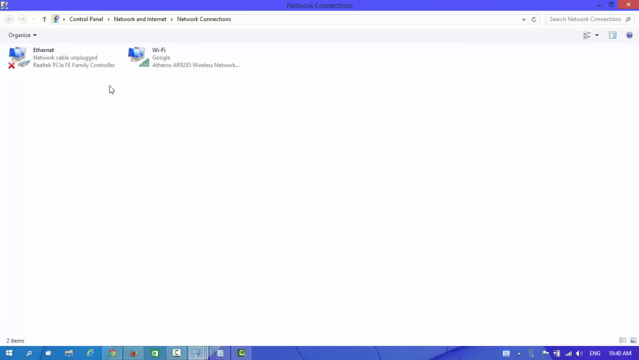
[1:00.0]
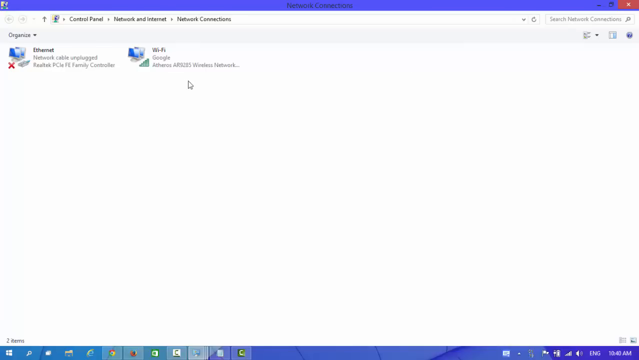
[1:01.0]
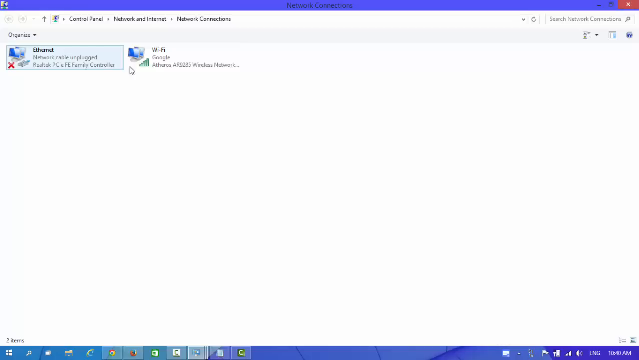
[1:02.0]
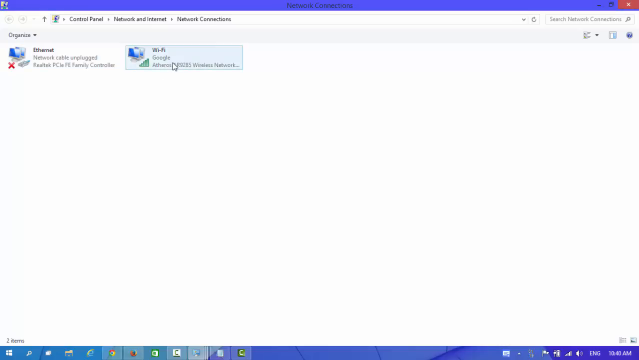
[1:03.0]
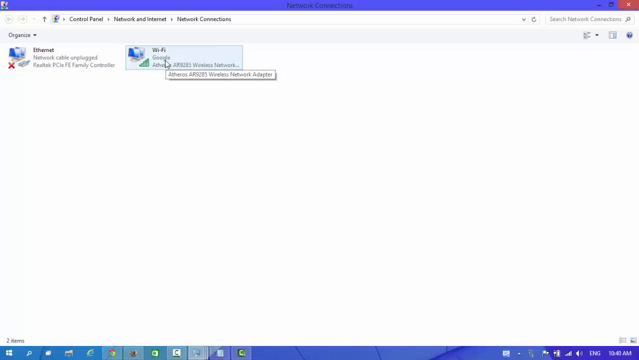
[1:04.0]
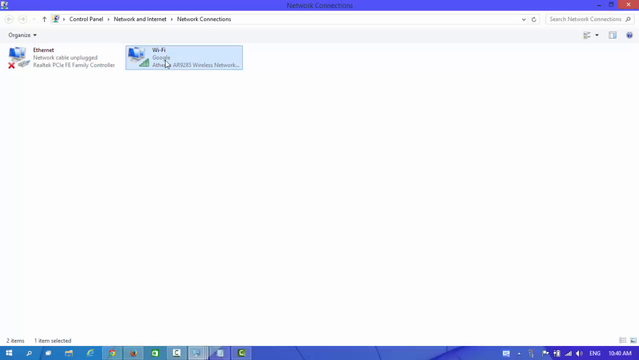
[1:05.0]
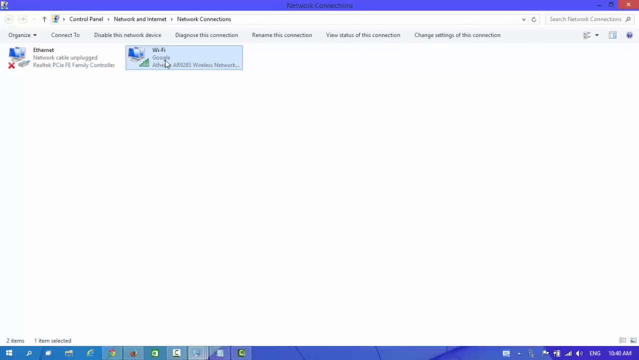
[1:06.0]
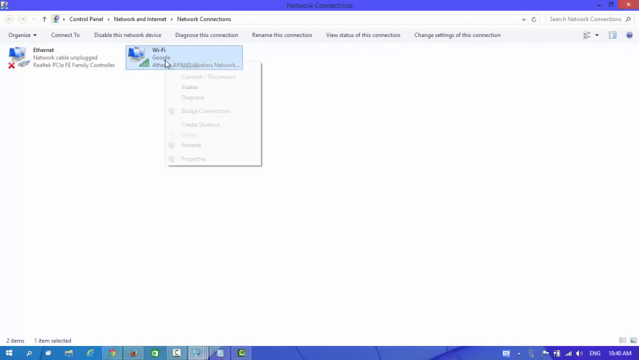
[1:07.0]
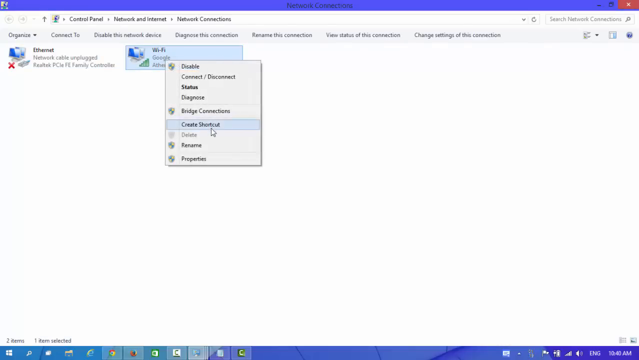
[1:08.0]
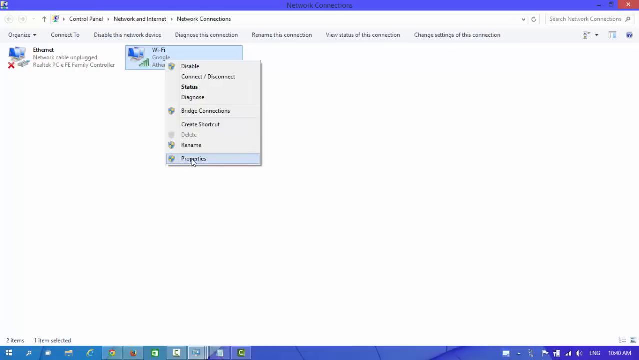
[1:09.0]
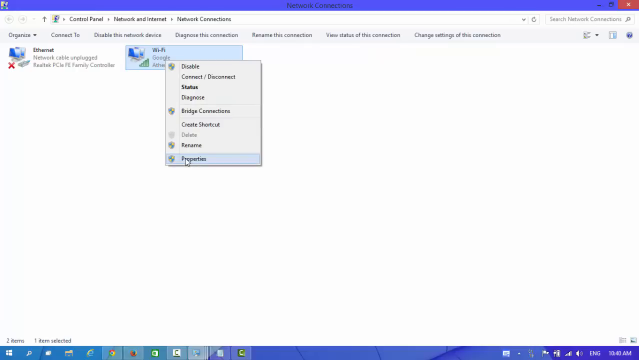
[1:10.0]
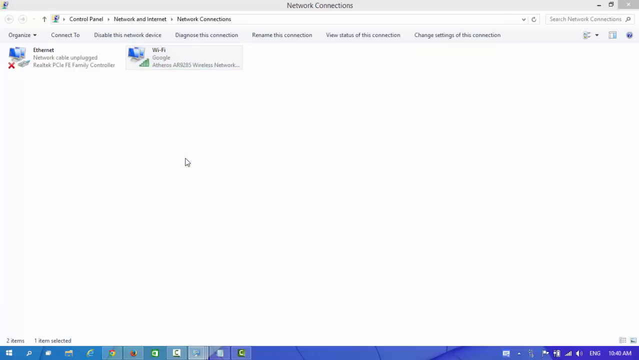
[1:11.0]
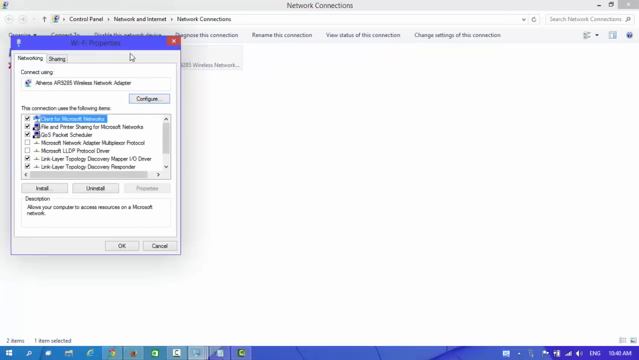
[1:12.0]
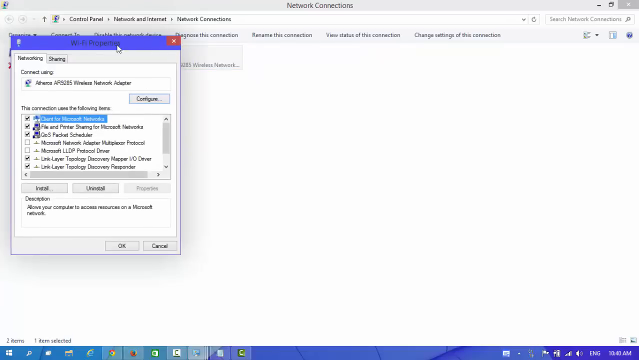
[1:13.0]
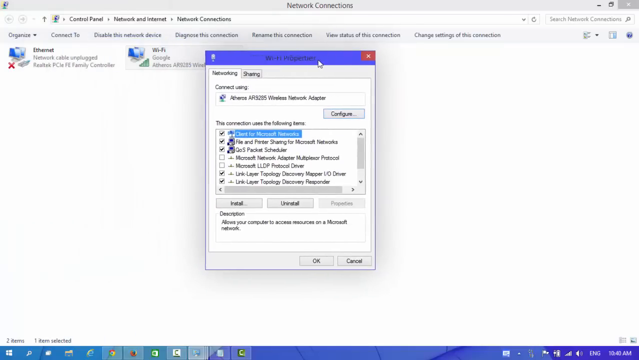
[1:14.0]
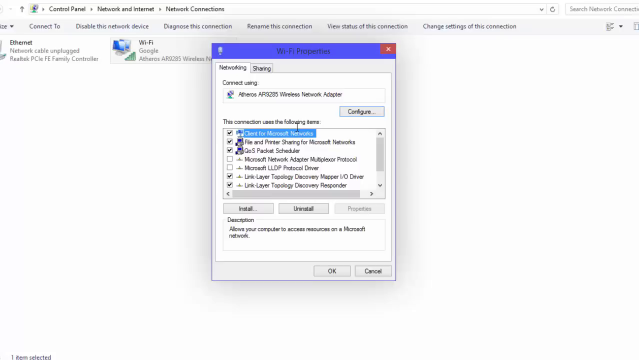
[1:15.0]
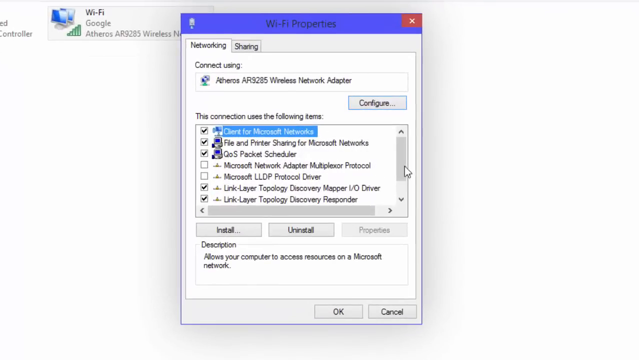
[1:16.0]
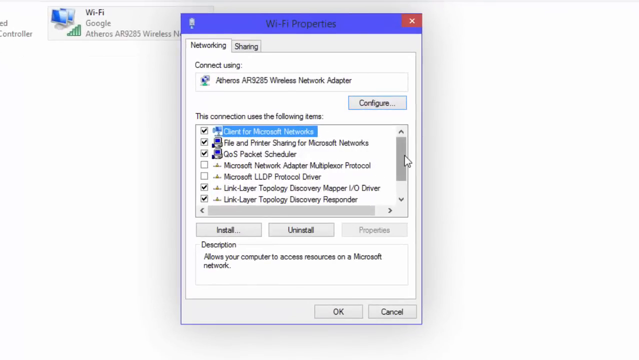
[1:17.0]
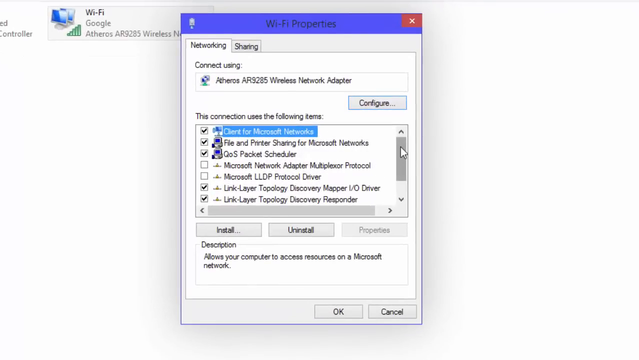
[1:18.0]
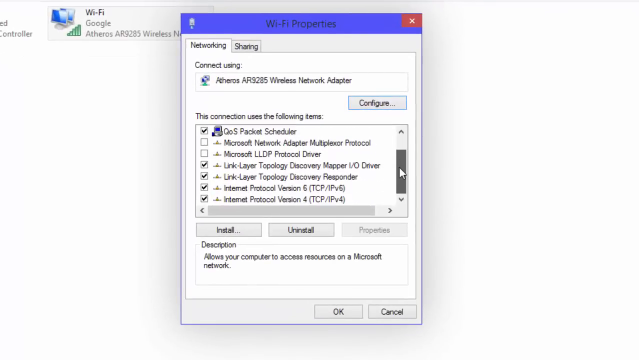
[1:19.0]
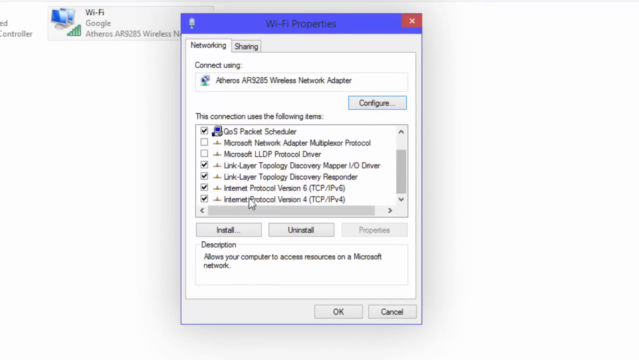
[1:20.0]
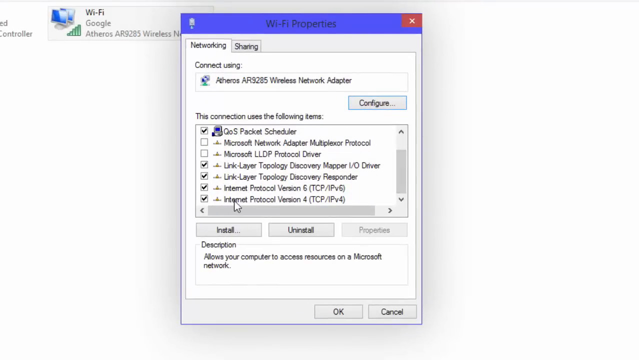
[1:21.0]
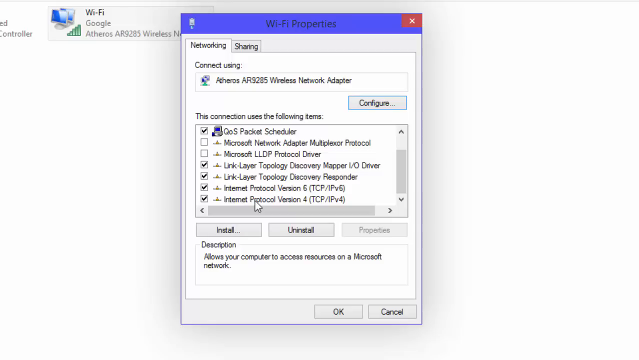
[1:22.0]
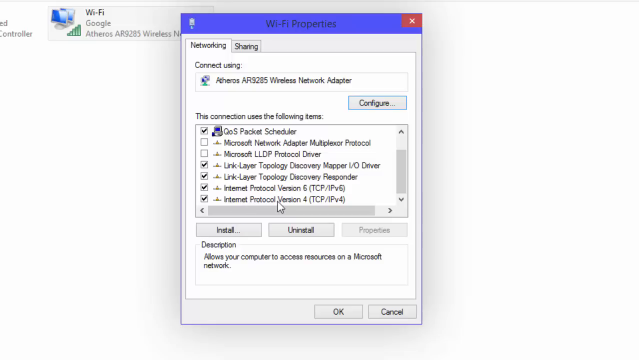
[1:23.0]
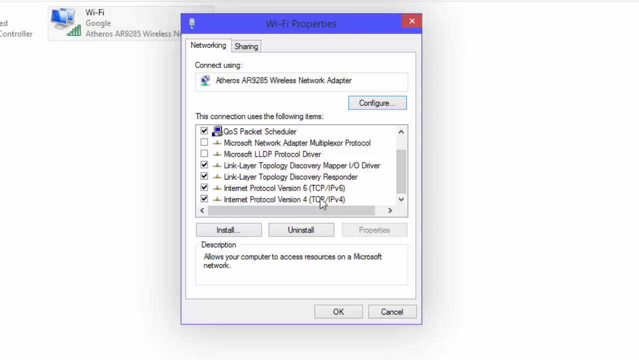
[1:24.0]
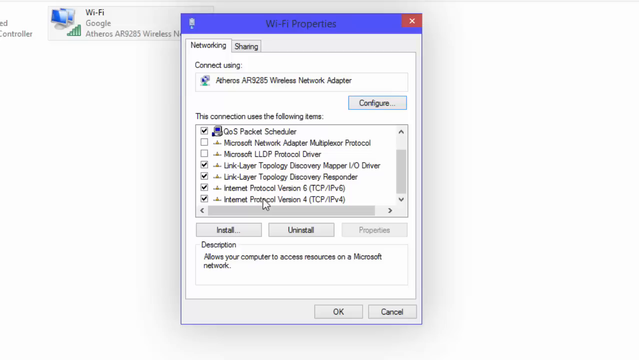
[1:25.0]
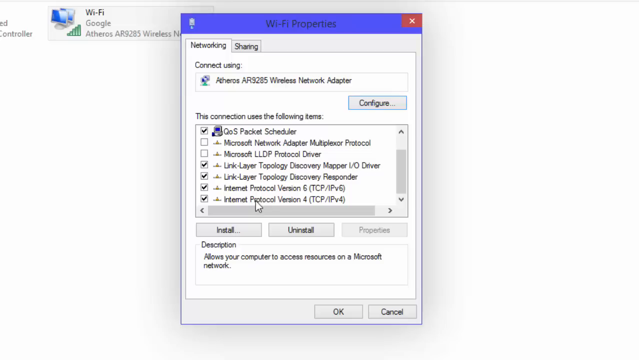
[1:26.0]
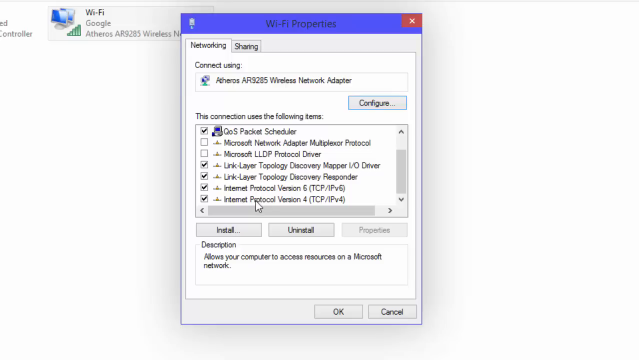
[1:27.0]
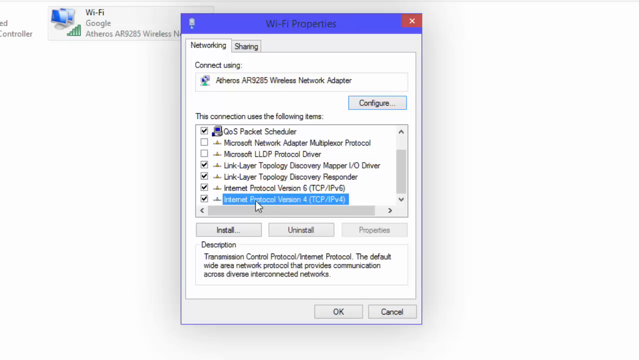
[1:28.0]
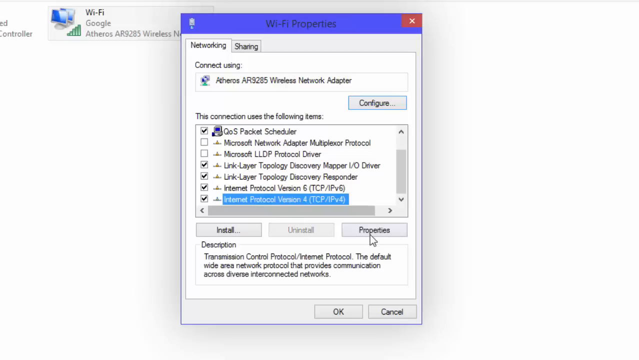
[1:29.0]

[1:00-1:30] As the mouse passes over each entry, its background turns light blue with a darker blue outline. The mouse hovers over Wi-Fi, which is highlighted in light blue. The person right-clicks it, a menu comes up, and the mouse hovers over "properties," which has a yellow and blue shield icon next to it. They click on properties, opening the Wi-Fi properties with the networking tab selected. A list of checkboxes appears, some checked and some not. The user scrolls down the list to the one that says "Internet Protocol Version 4, TCP/IPv4" and hovers the mouse over it without doing anything else.